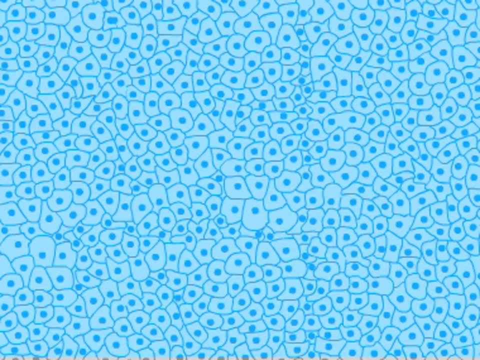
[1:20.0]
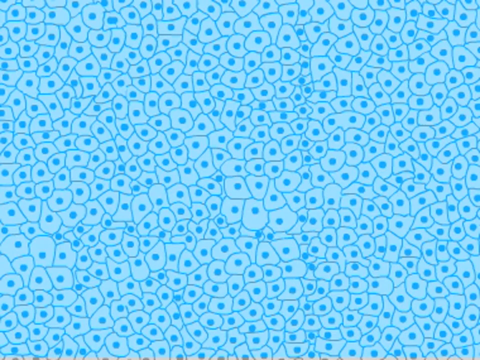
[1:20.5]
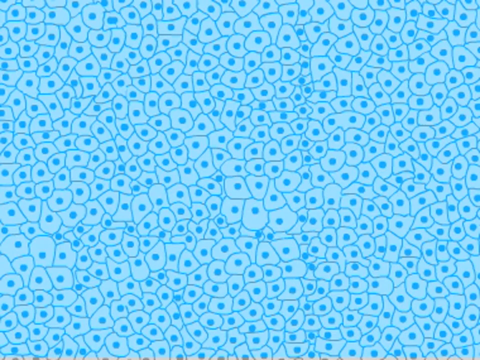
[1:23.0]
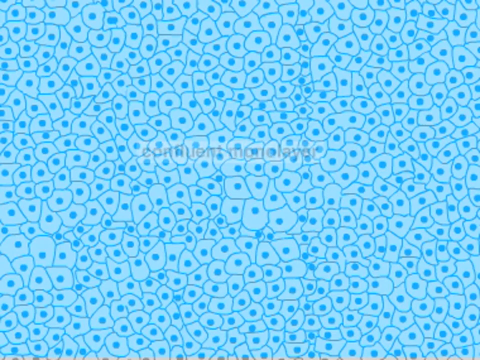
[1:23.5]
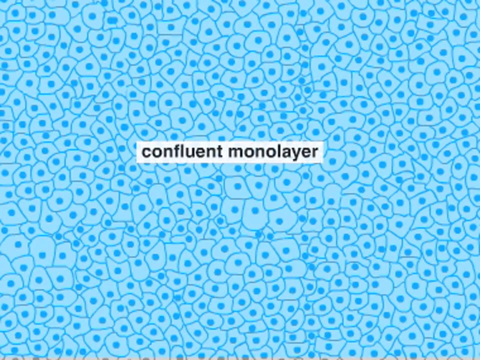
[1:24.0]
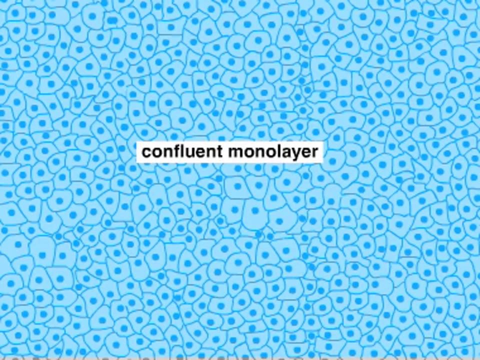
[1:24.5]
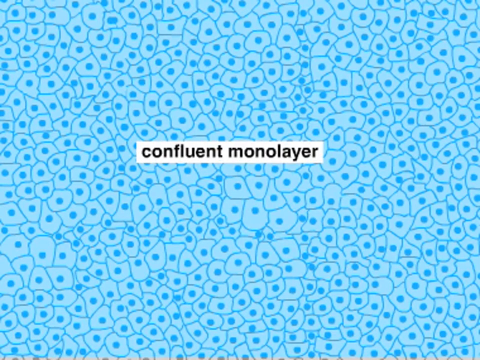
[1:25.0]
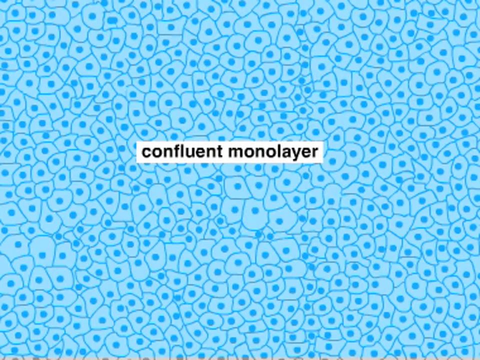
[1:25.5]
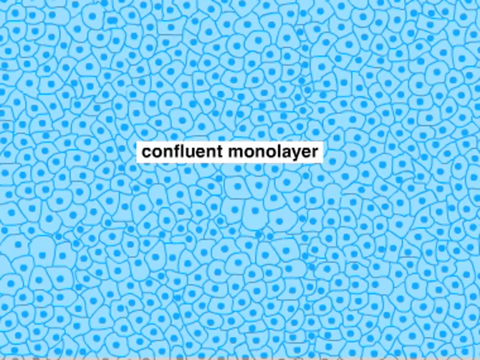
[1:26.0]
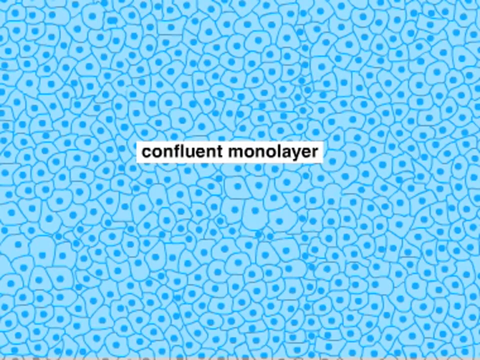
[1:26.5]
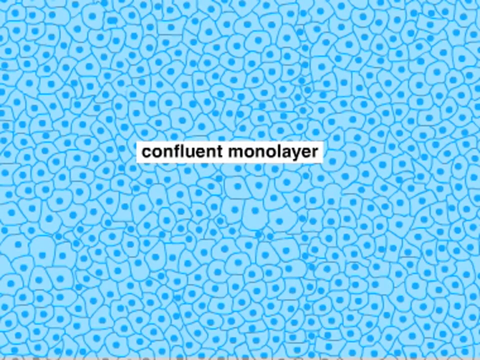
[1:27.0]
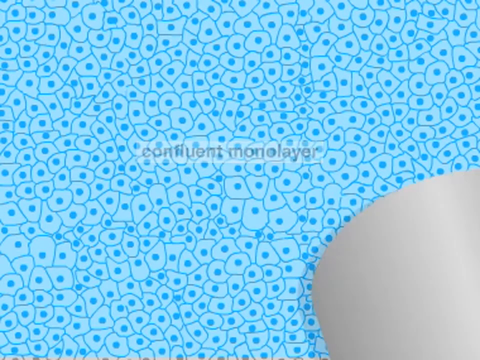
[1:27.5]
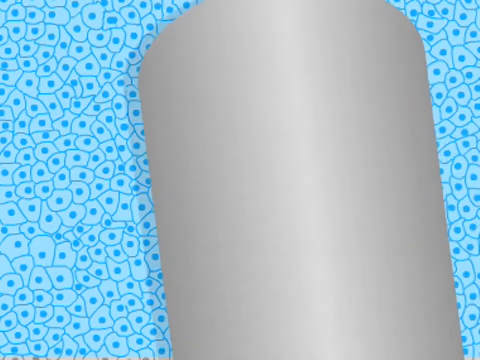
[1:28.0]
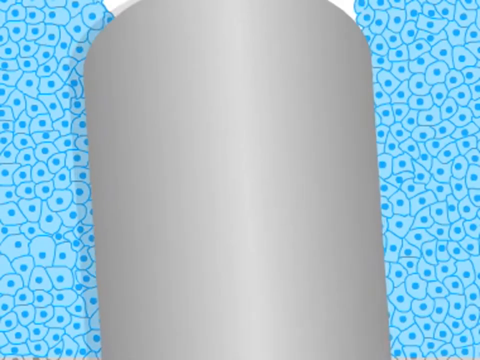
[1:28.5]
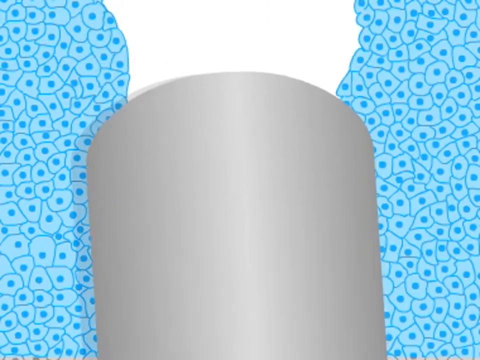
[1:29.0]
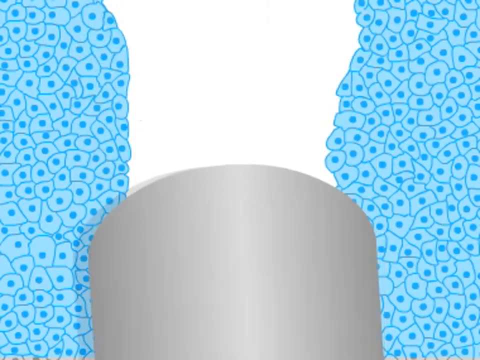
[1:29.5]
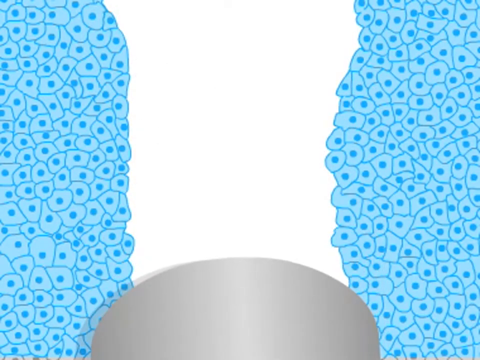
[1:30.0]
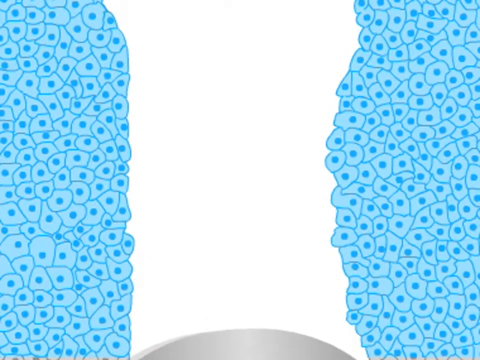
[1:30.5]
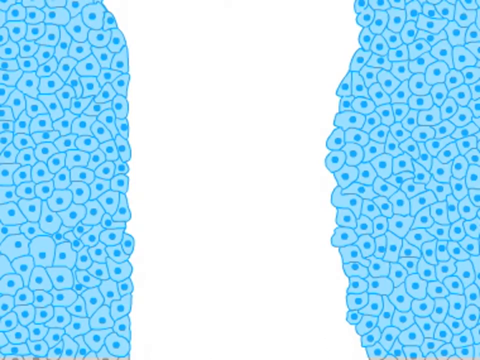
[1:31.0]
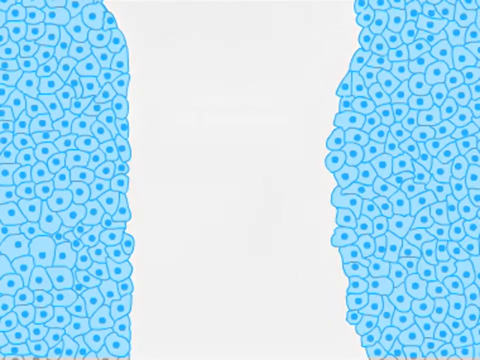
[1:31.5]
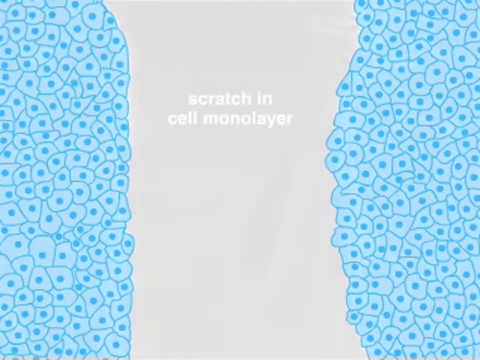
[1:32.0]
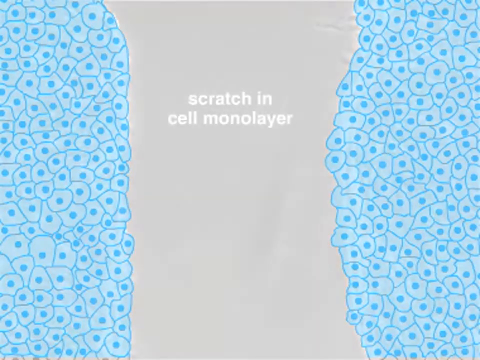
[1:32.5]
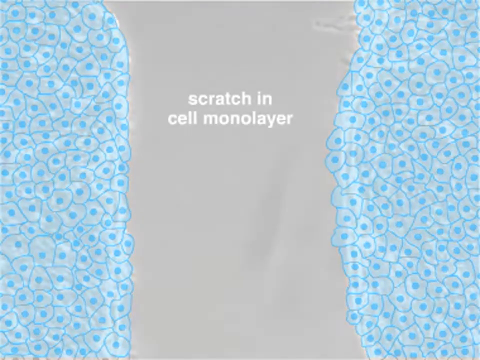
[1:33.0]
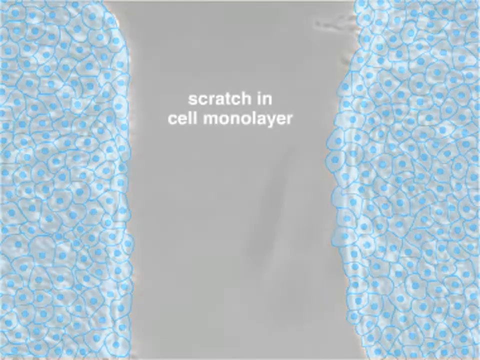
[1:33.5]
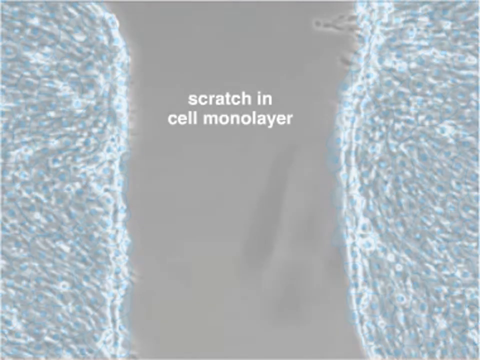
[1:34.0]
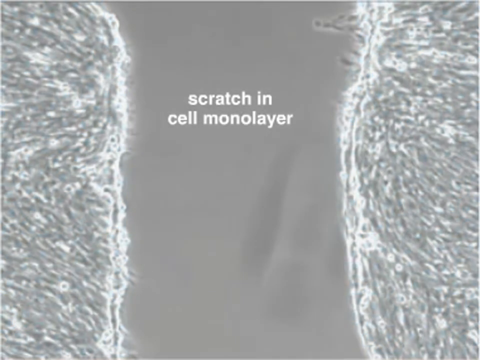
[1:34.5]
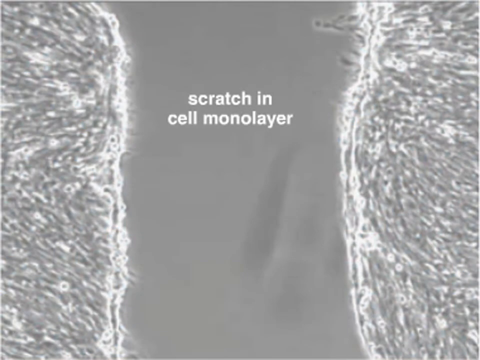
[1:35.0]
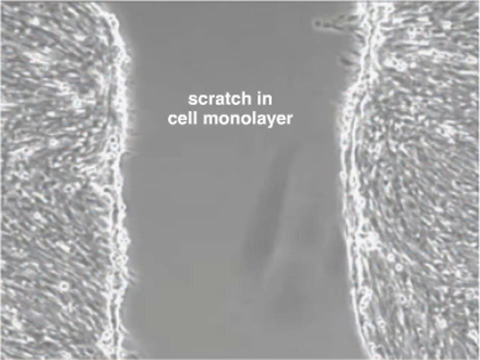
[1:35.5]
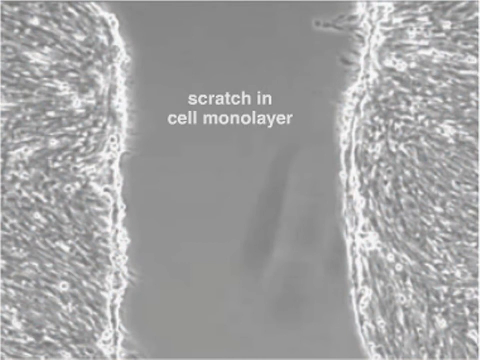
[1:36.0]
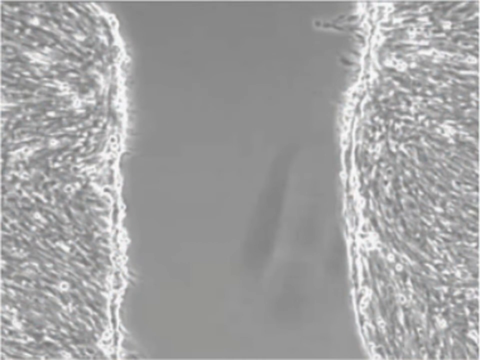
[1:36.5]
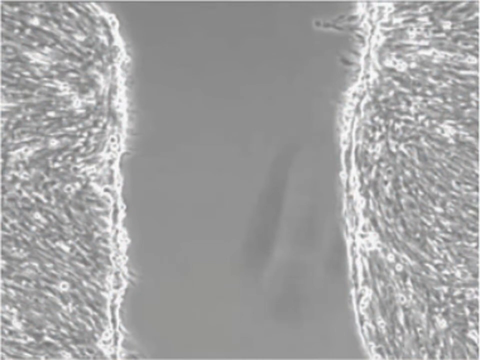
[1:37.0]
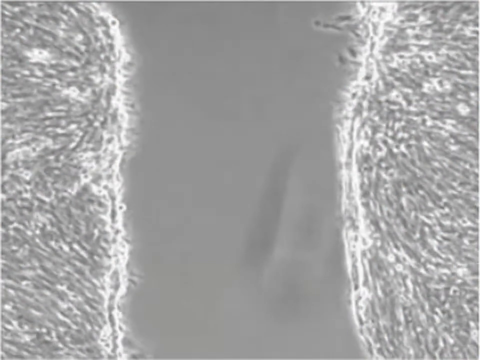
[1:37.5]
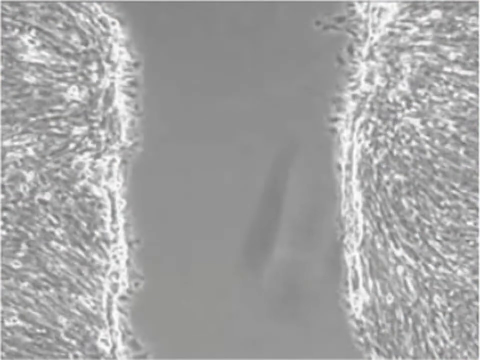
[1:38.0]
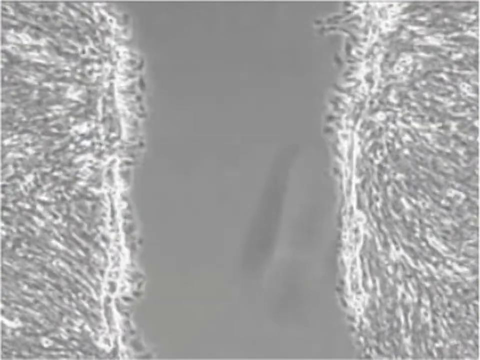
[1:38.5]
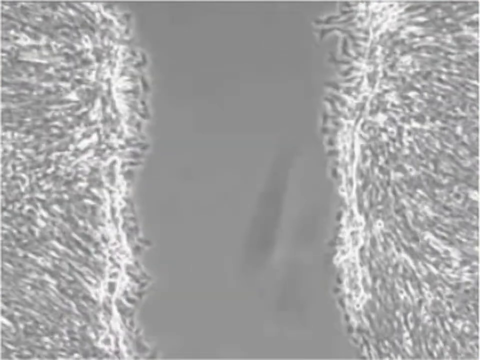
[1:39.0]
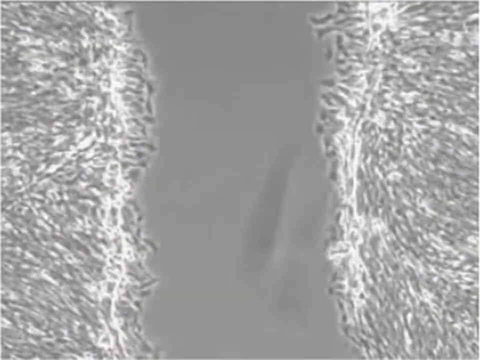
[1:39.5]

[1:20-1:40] The cells are again shown compacted together with no space between them; the light blue cells have reached their capacity inside the Petri dish, and the label "confluent monolayer" appears again. Something scrapes a layer away, labeled "scratch in the cell monolayer," apparently a metal device scratching it. After the scratch, the view switches from a drawn model to an actual view of the cells under a microscope. The cells immediately start multiplying and growing back together, refilling the large gap left by the scratch, multiplying very quickly.